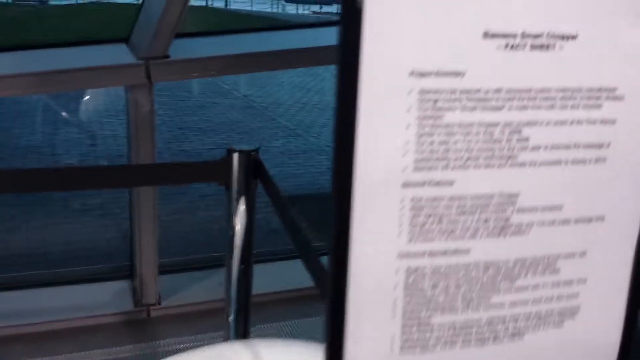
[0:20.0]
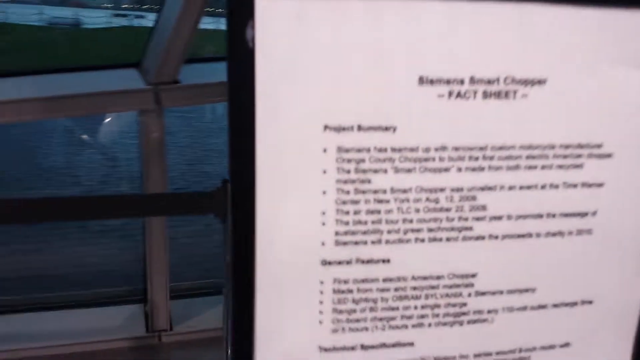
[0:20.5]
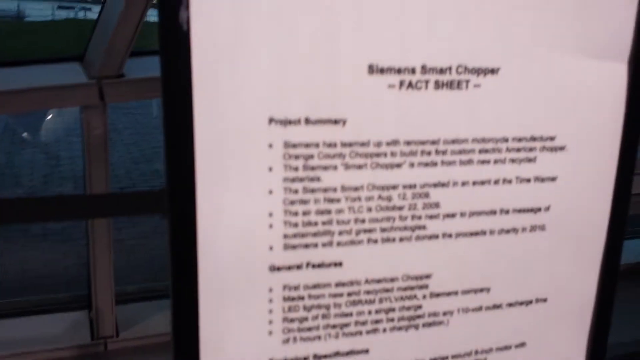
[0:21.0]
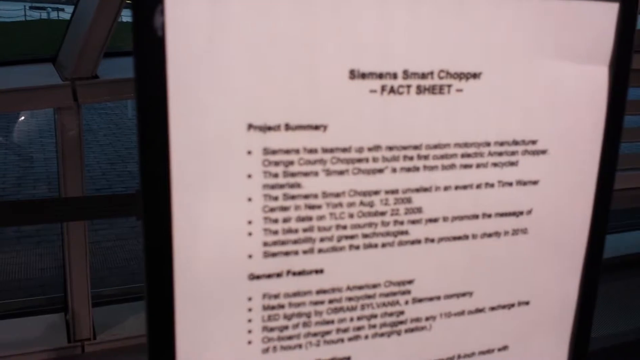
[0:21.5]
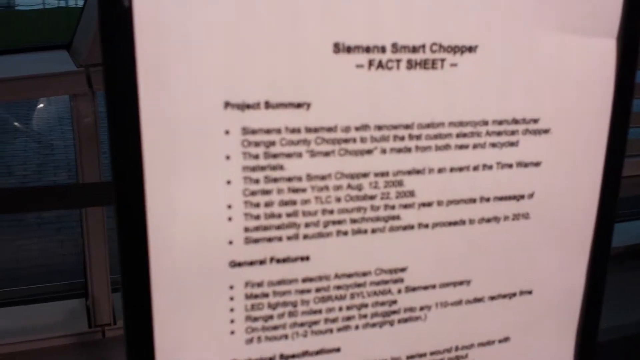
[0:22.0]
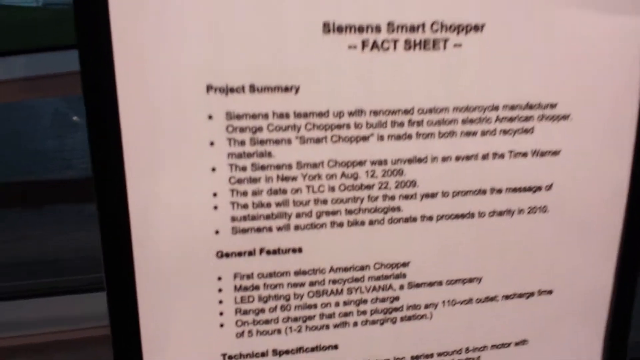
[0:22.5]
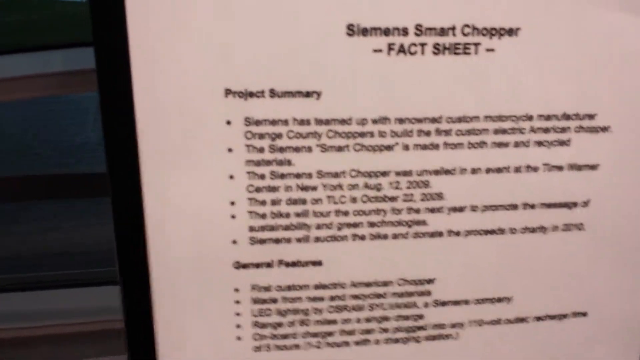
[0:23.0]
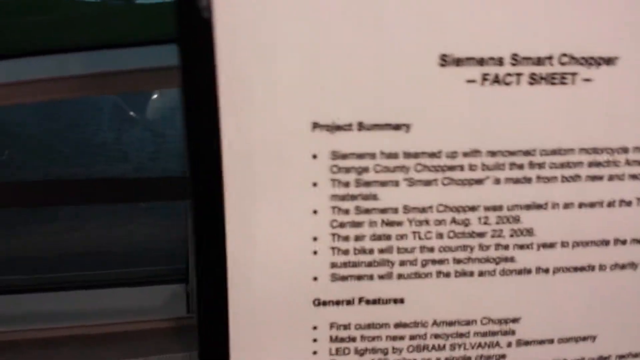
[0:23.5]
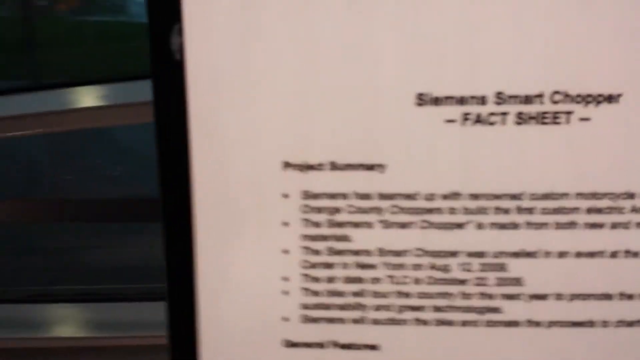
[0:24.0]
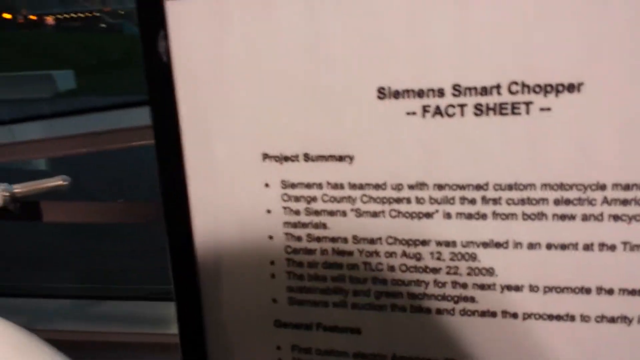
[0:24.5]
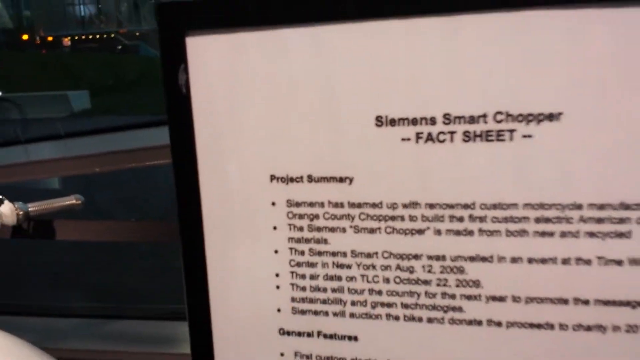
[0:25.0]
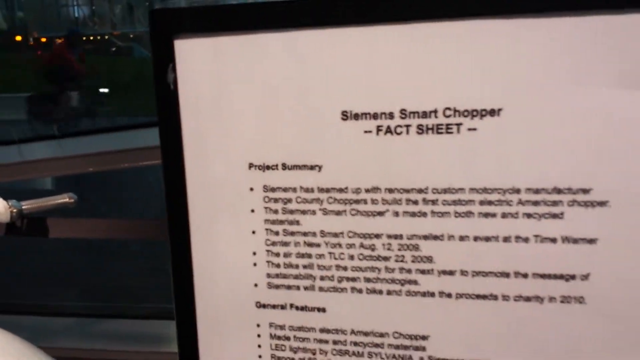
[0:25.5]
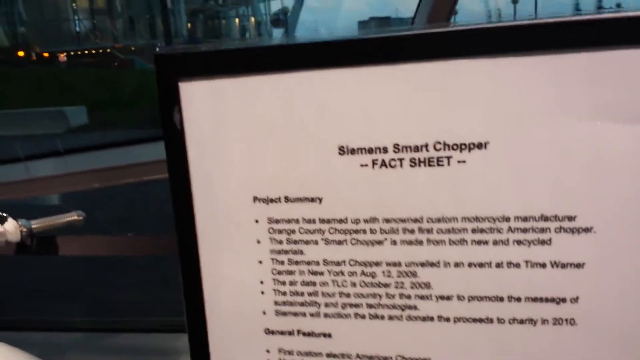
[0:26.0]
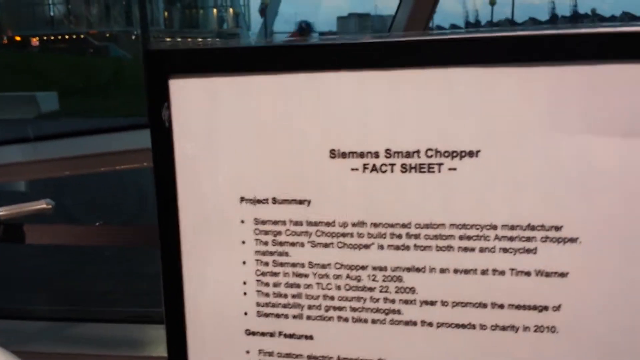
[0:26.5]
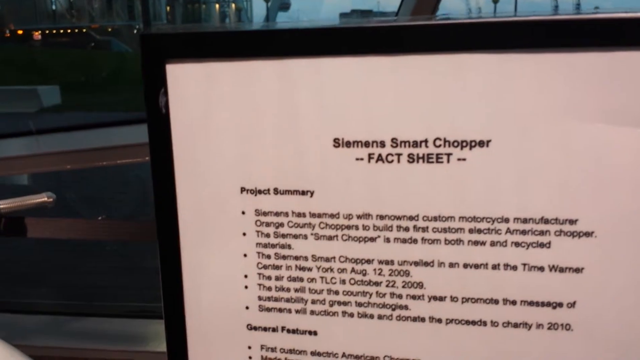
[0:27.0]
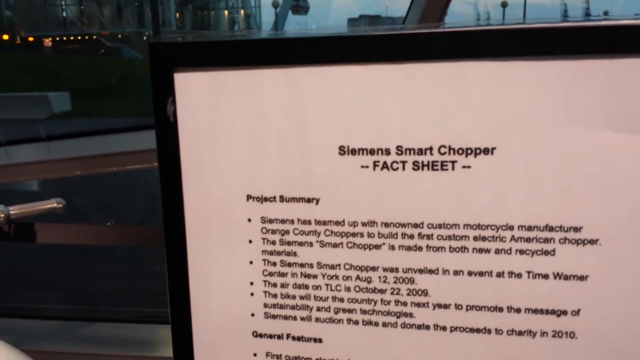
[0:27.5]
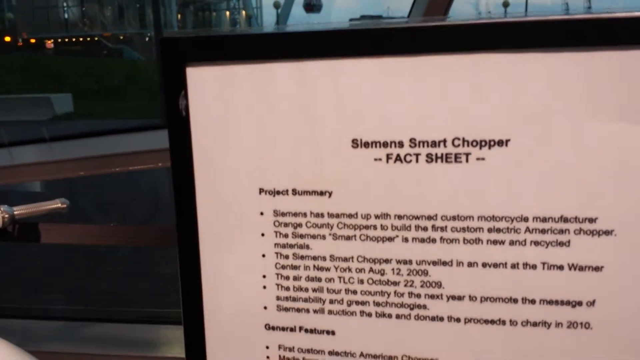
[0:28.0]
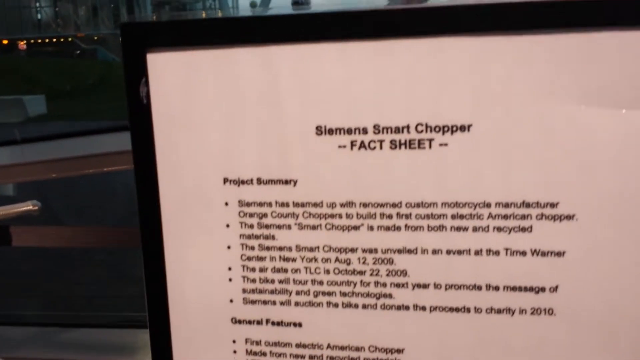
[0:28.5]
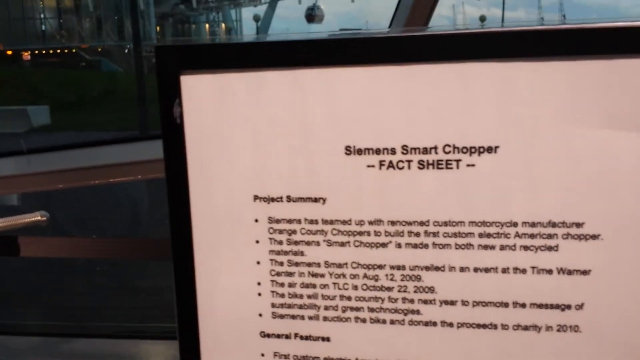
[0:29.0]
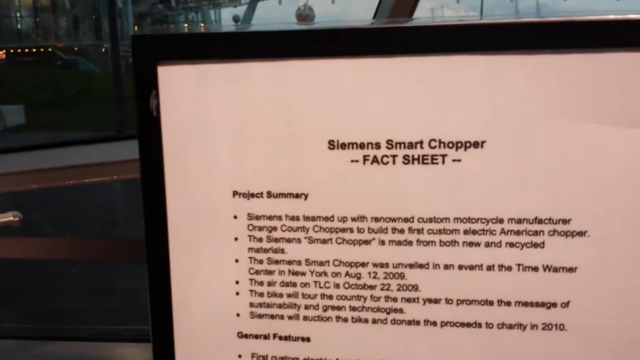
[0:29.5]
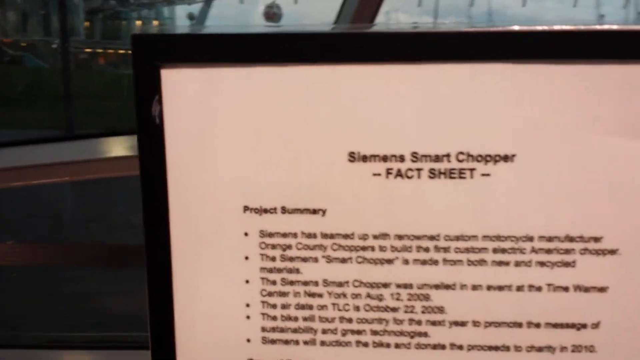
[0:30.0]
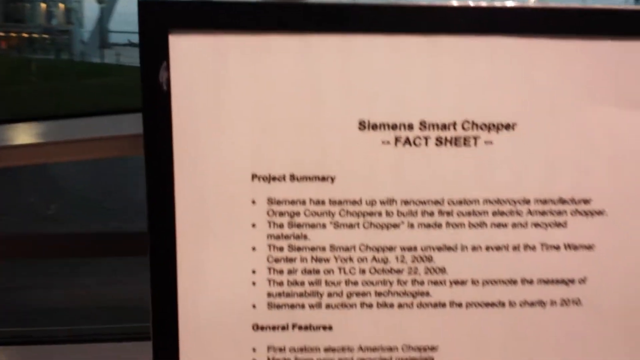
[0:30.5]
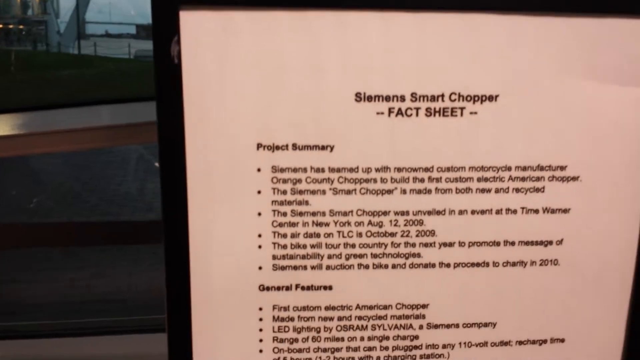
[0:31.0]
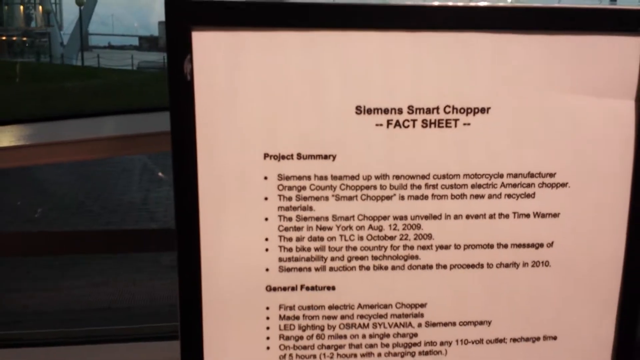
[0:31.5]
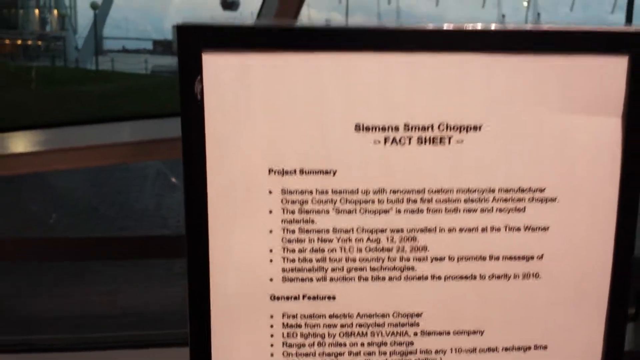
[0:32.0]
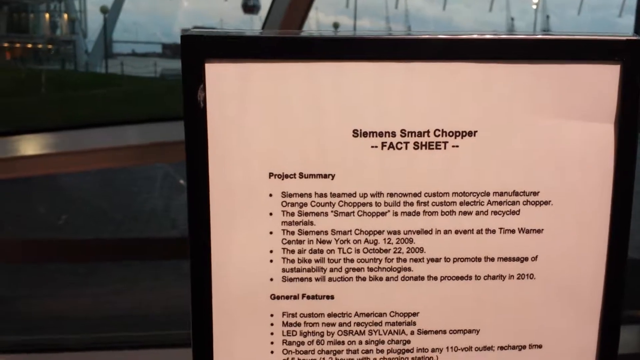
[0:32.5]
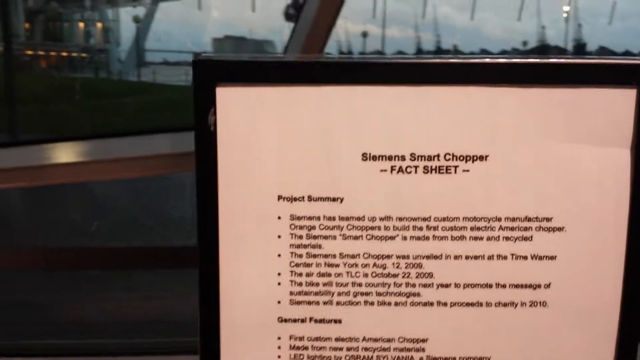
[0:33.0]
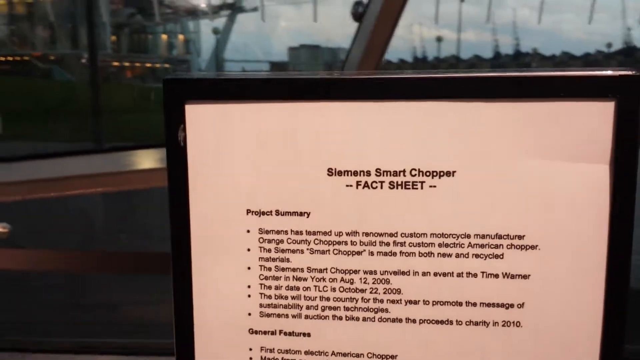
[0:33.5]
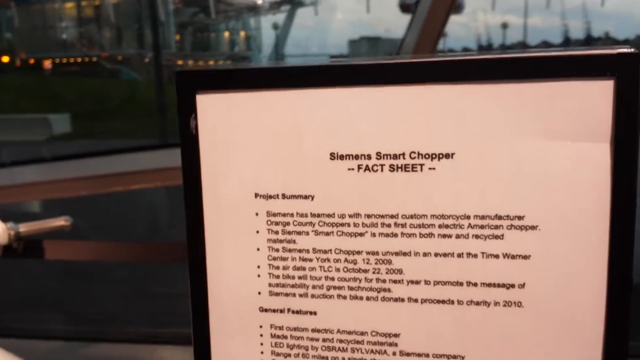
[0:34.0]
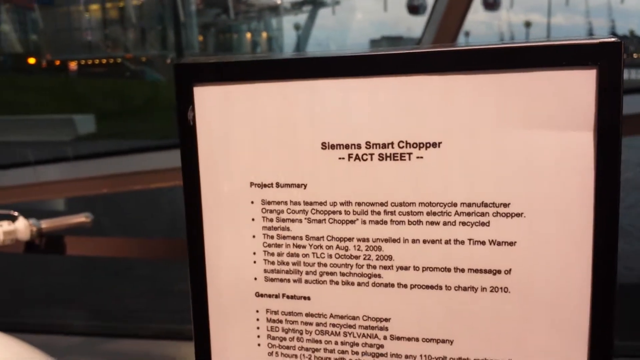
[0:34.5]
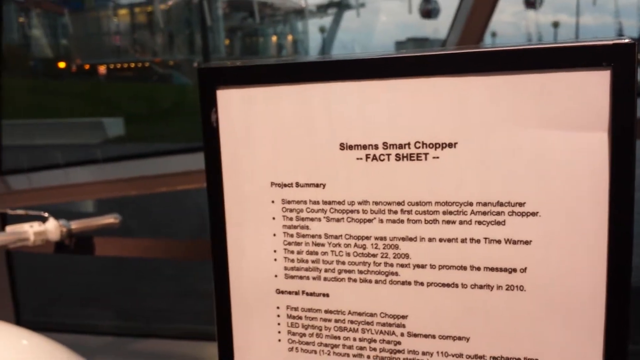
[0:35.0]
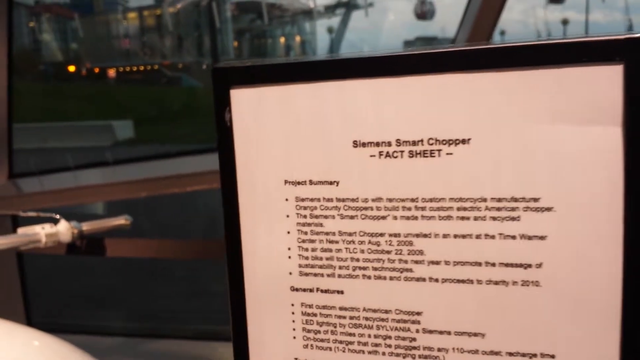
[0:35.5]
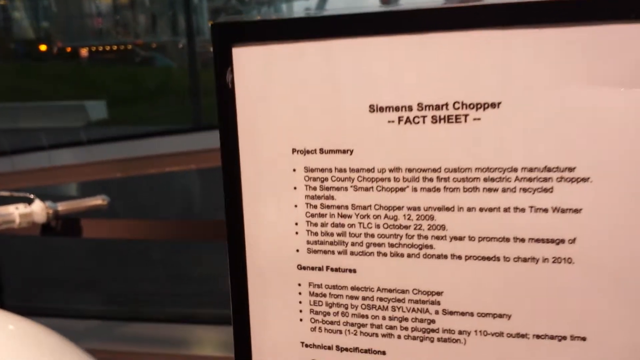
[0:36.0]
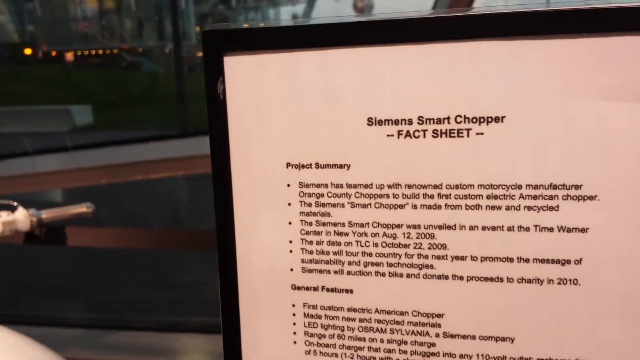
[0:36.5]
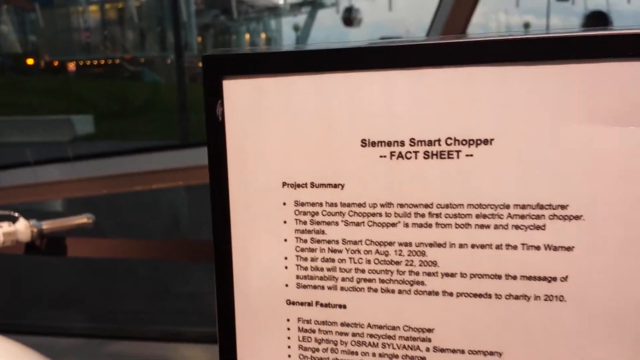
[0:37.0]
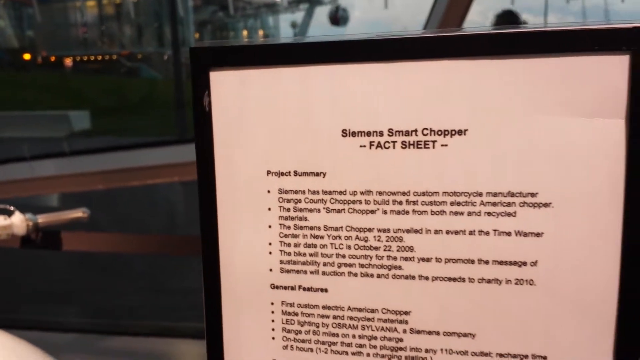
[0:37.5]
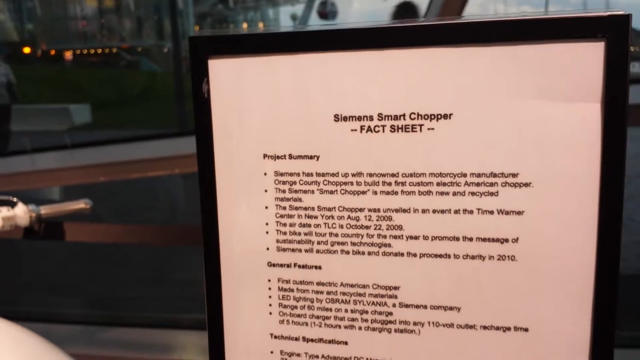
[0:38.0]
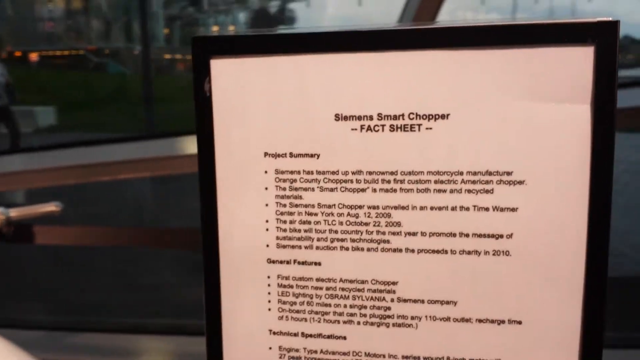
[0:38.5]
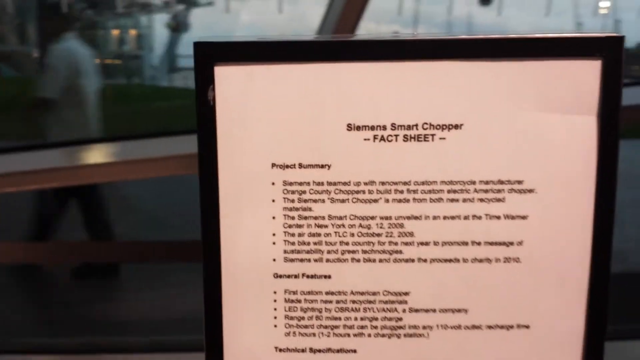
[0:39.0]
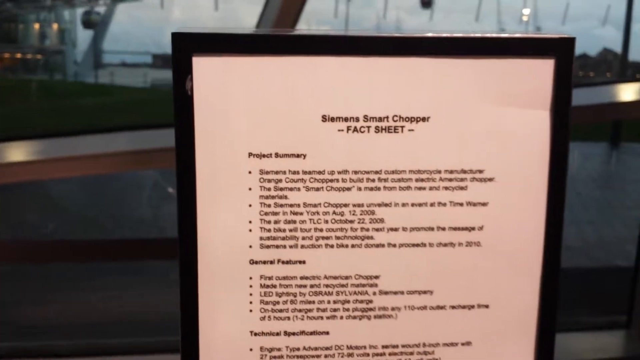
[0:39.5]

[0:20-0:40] A piece of white paper in a stand right next to the motorcycle has a lot of black text printed on it. The title is "Siemens Smart Chopper Fact Sheet". The text is kind of blurry. At the top it says "Project Summary", followed by a bunch of bullet points, and underneath that it looks like it says "General Features". The camera zooms in a little, and some shadows are visible on the paper. The camera is shaking pretty much the entire time, moving up to the top of the page and back down. The first bullet point says "Siemens has teamed up with renowned custom motorcycle manufacturer, Orange County Choppers to build the first custom electric American chopper", followed by many more bullet points all the way to the bottom of the sheet.